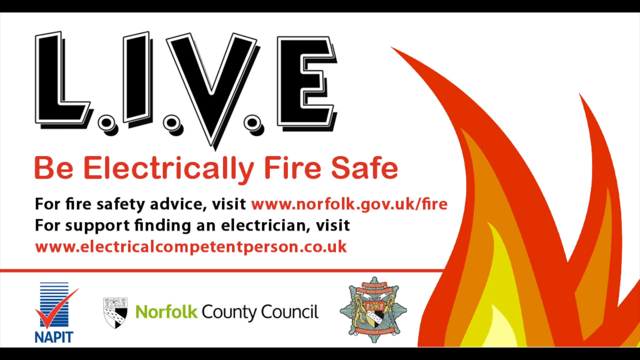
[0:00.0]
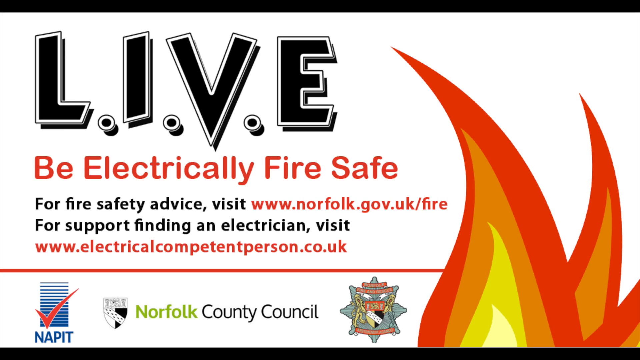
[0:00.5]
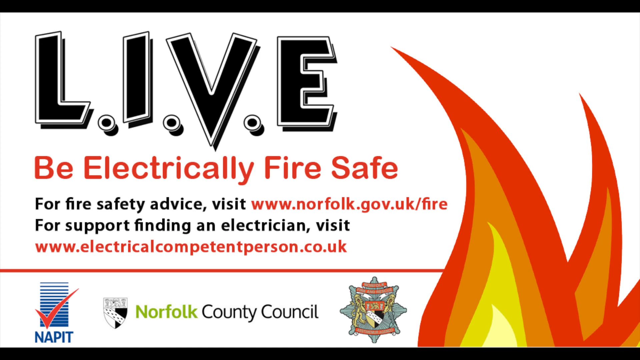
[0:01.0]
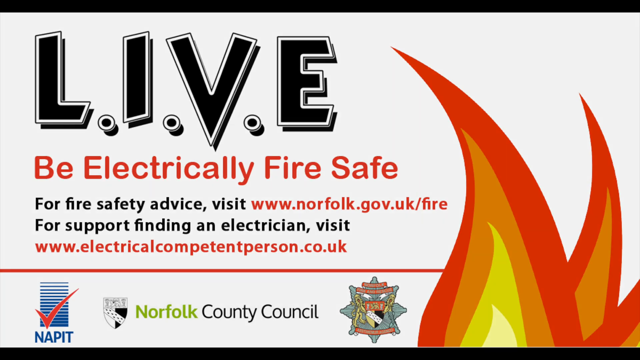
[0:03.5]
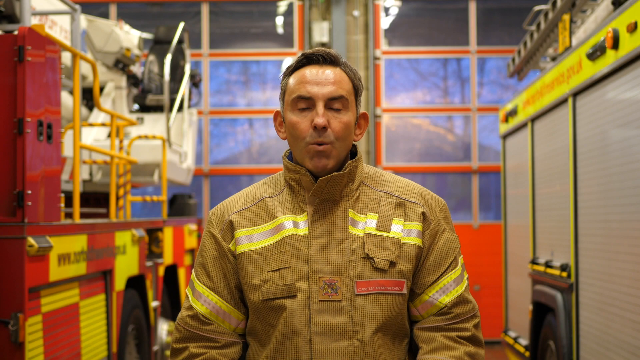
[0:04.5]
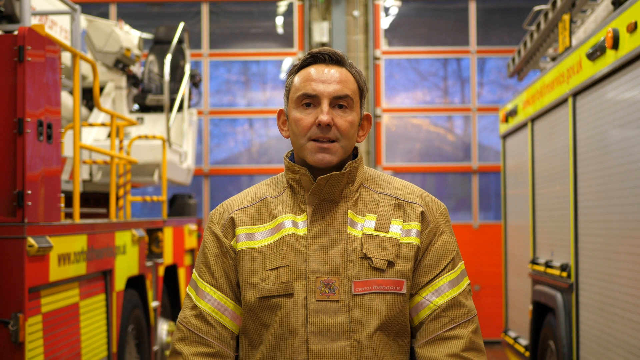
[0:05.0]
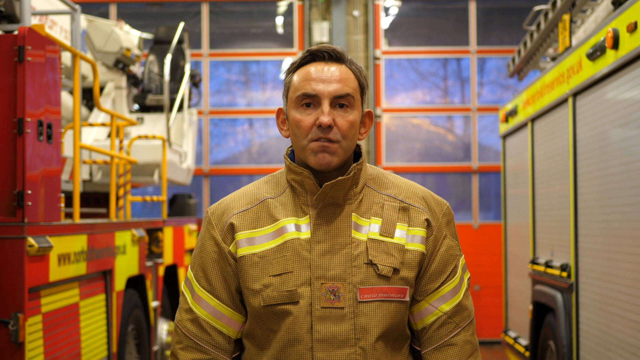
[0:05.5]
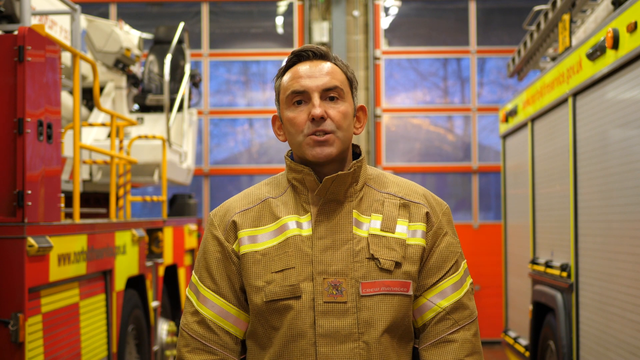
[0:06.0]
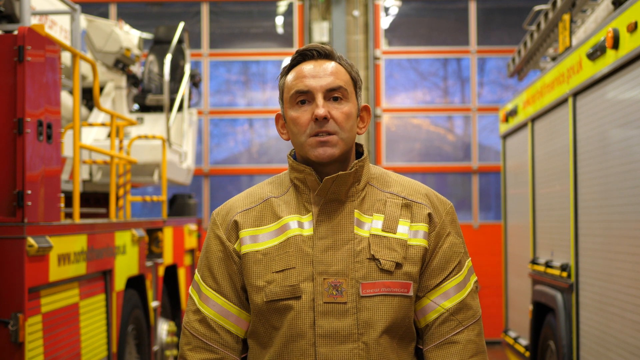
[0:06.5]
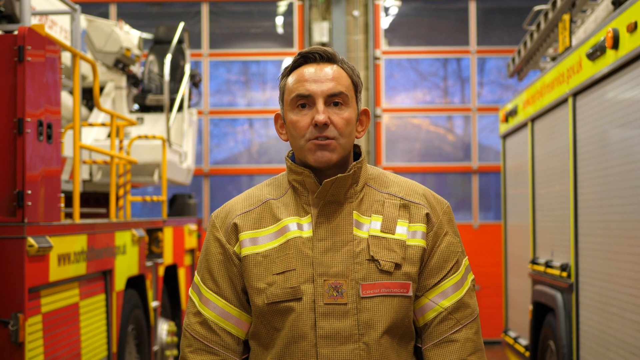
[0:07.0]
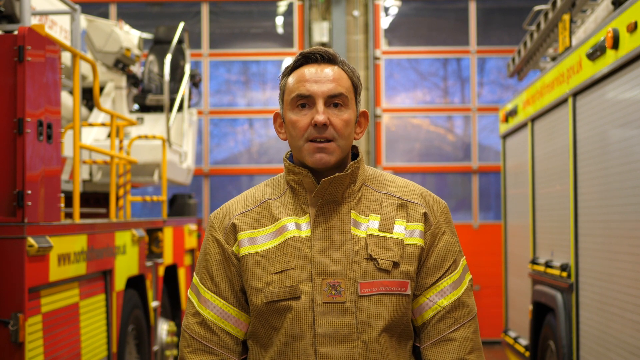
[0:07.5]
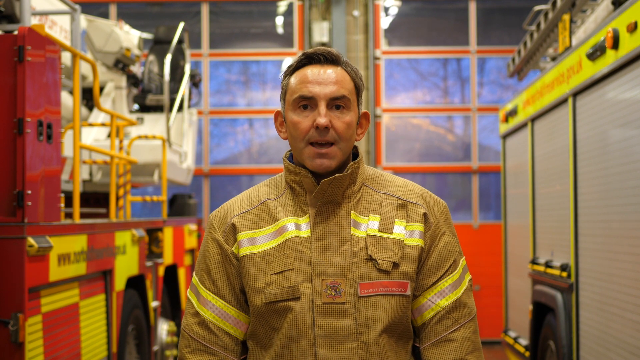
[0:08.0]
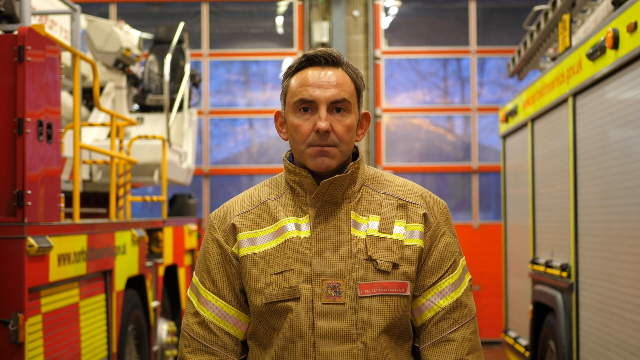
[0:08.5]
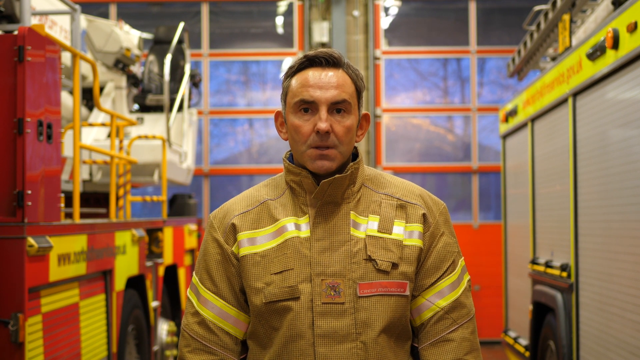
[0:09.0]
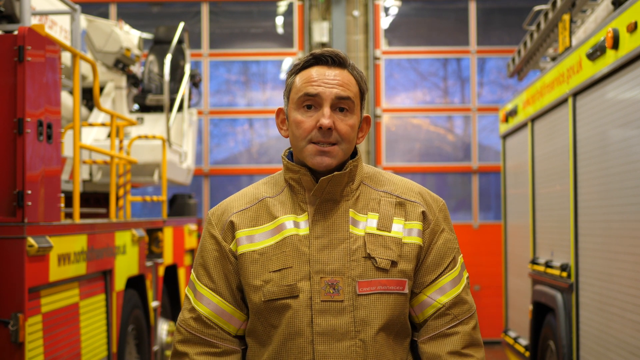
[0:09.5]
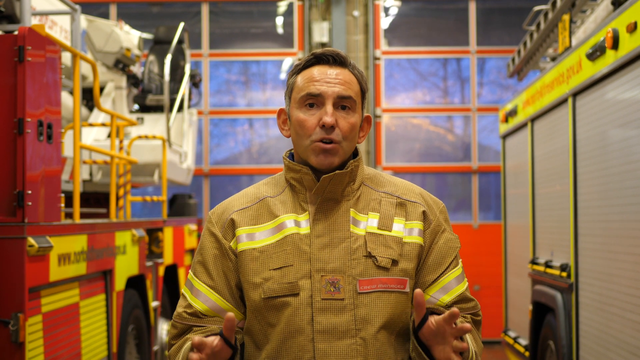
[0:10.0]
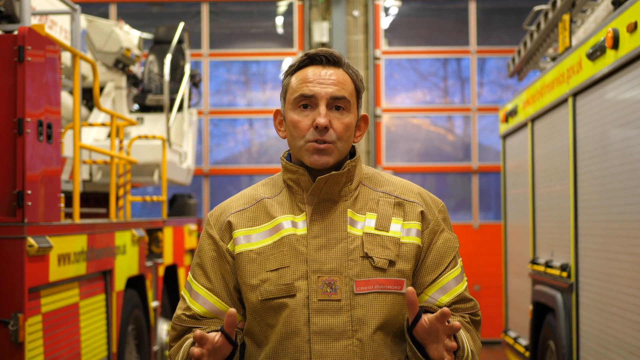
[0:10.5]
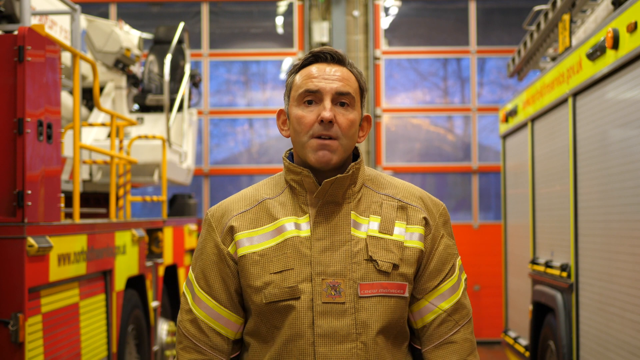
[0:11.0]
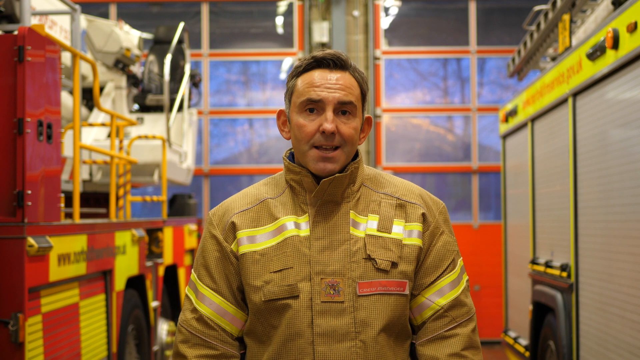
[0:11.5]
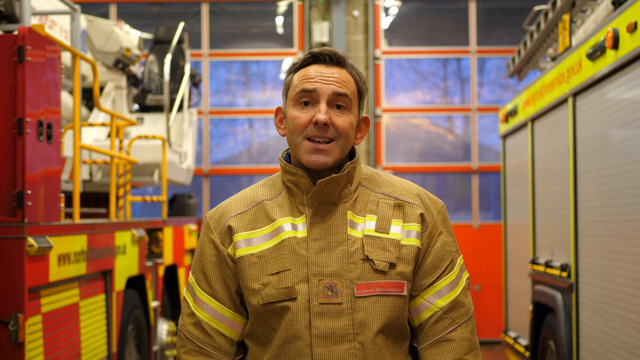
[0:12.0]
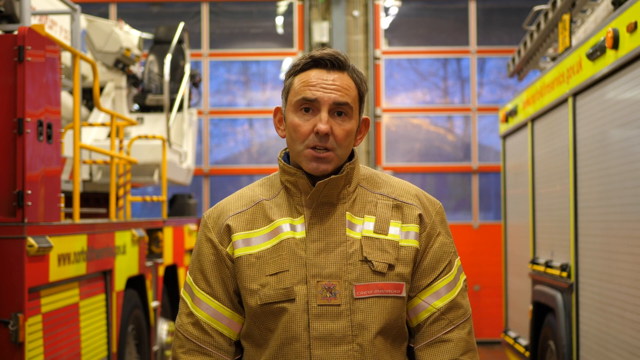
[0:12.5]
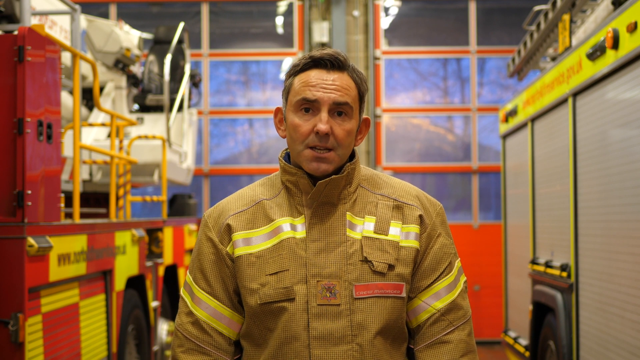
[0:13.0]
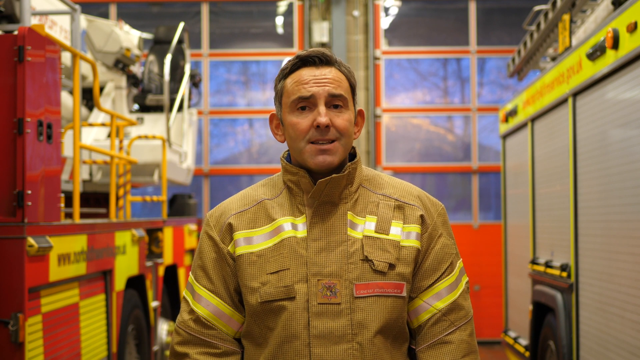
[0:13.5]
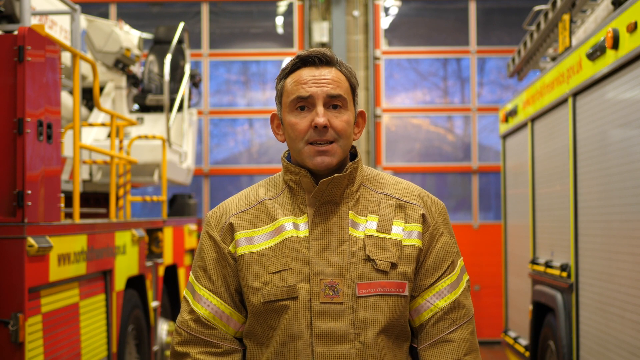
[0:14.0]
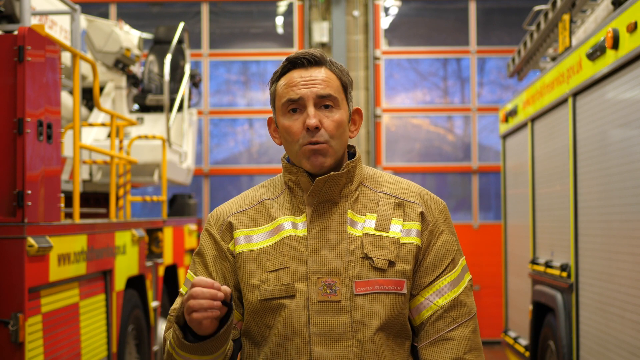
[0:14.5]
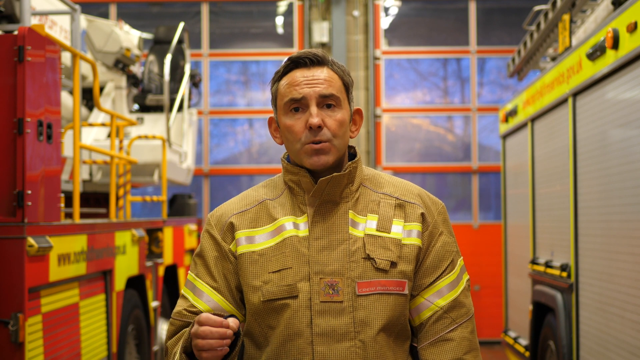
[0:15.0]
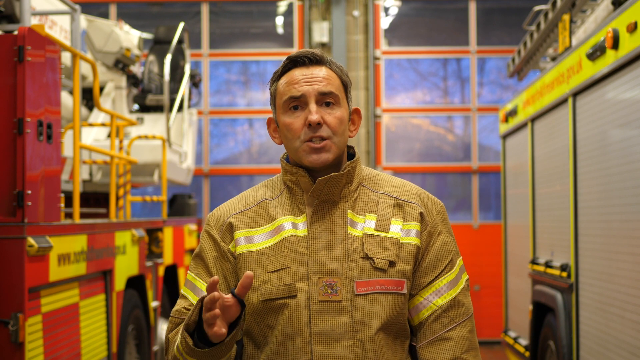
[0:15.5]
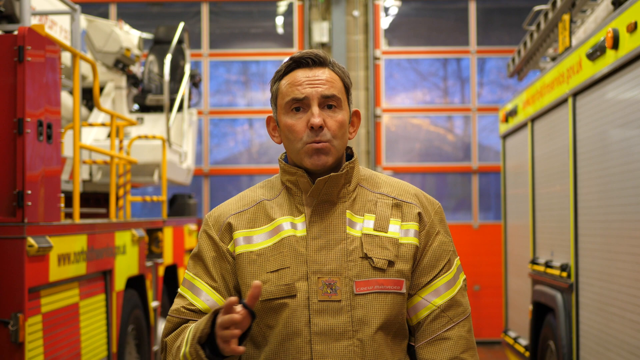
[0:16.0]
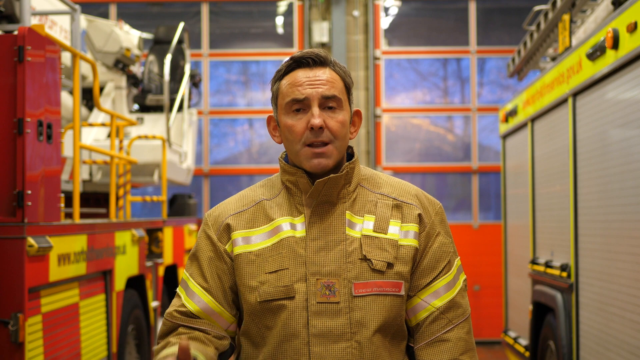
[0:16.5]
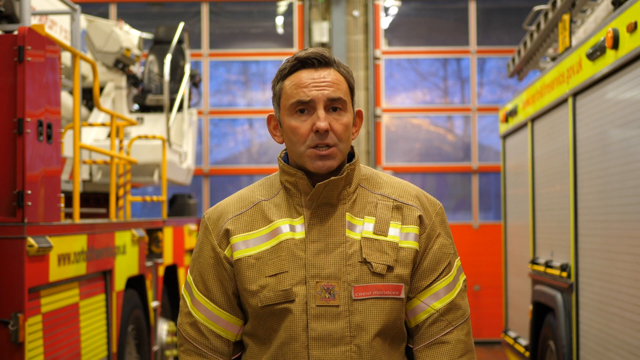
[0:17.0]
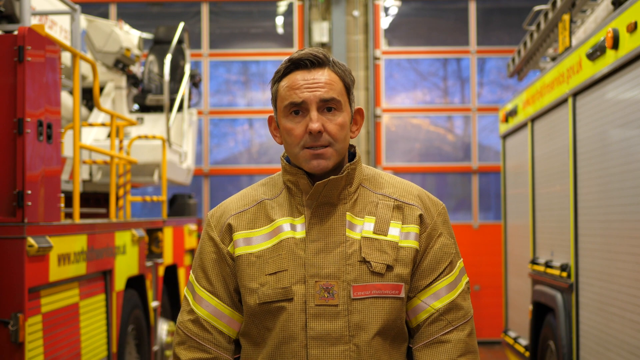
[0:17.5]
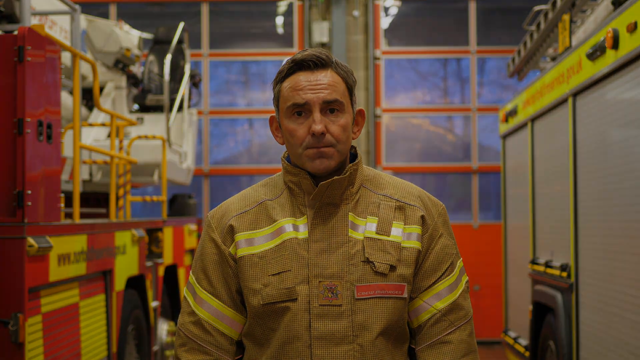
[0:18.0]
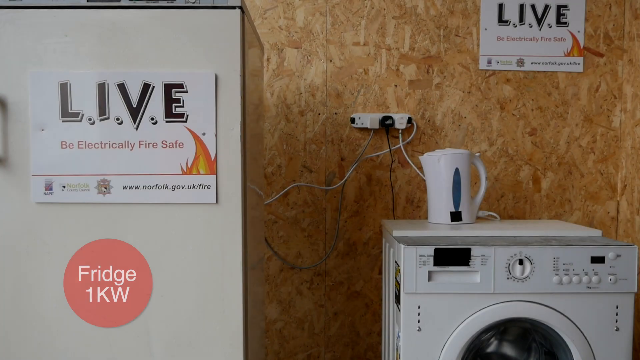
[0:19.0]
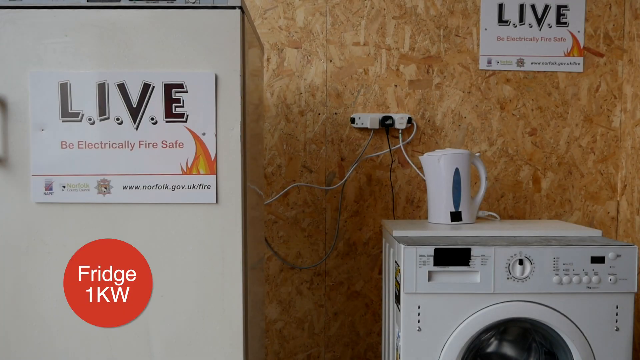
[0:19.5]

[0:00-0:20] A large red, orange and yellow two-pronged flame is at the bottom right of the screen; it is a clip art picture, not a photograph. On the left-hand side are the capital letters L.I.V.E with dots between them, and red text underneath reads "Be electrically fire safe." Below is contact information with email addresses and website addresses for different places, and at the bottom are icons for the fire service and Norfolk County Council. The screen then cuts to a fireman wearing a beige fireman jacket with reflective strips across the front under both shoulders and across both arms at the top, plus a red strip across the front of the jacket. He is speaking to the camera and gesticulating with his right hand towards the screen. Behind him are two large red fire doors, and through their glass the outside is visible. On the right-hand side is the side of a fire engine, and on the left-hand side is the side of another fire vehicle. The video then cuts to part of a kitchen with an appliance, apparently a freezer, with a kettle stood on top of it.